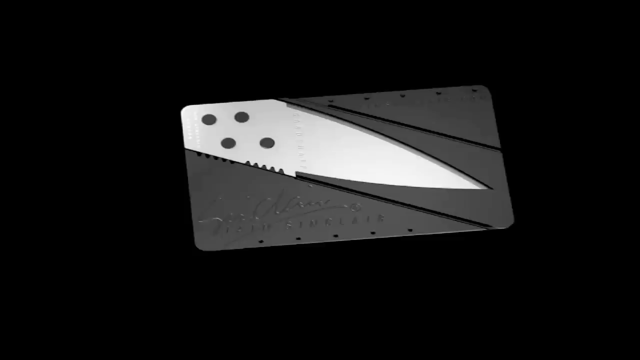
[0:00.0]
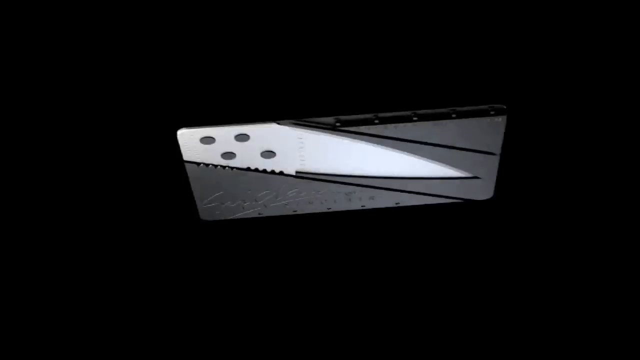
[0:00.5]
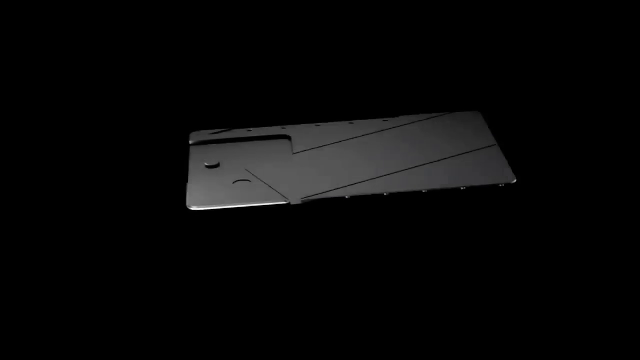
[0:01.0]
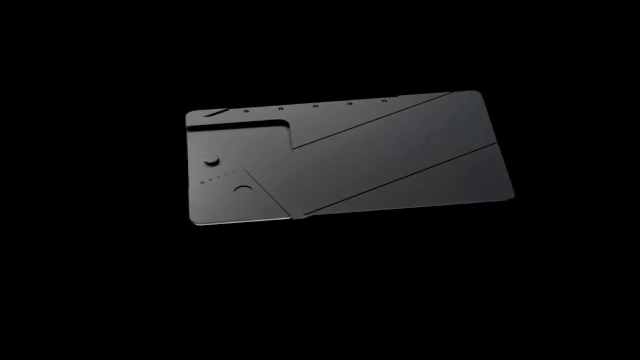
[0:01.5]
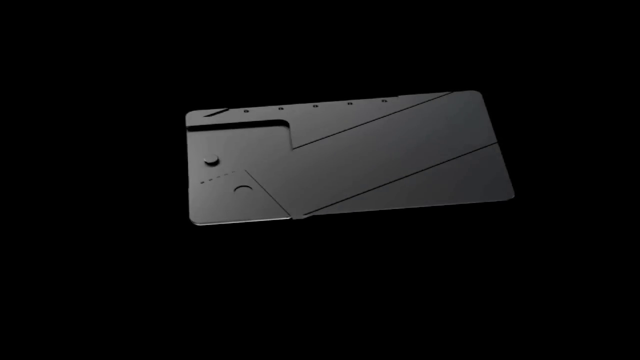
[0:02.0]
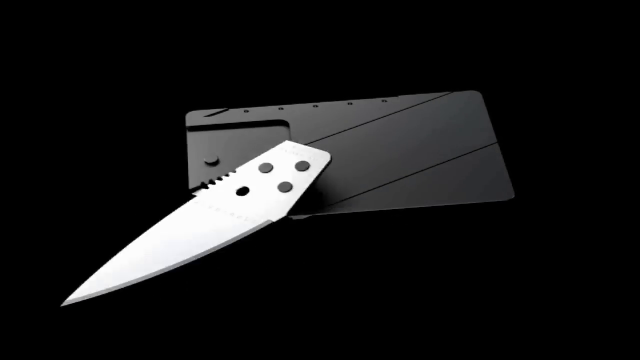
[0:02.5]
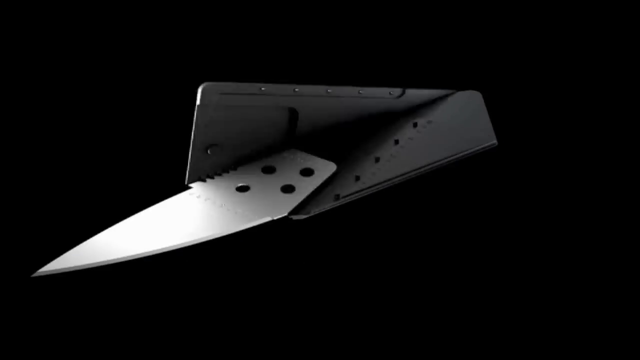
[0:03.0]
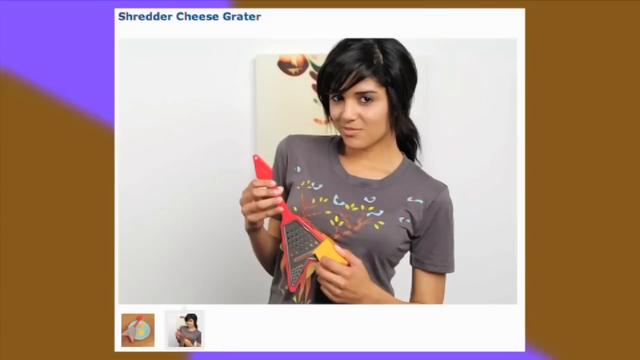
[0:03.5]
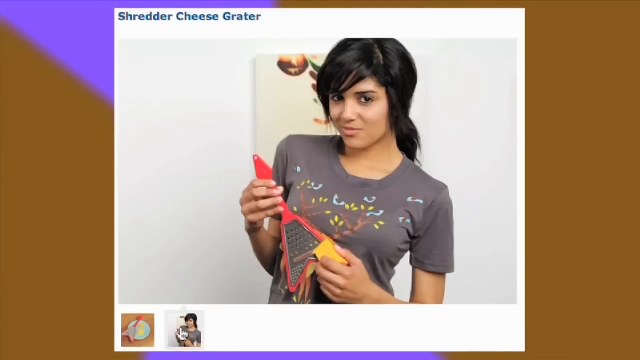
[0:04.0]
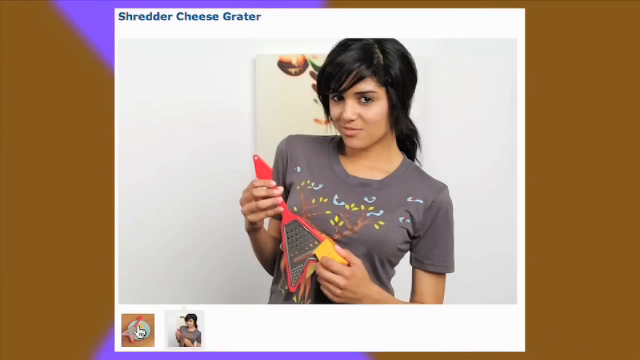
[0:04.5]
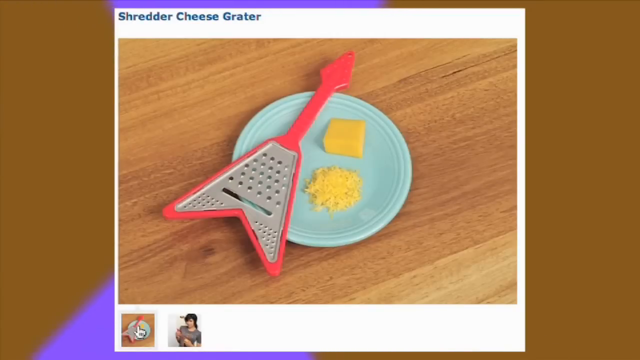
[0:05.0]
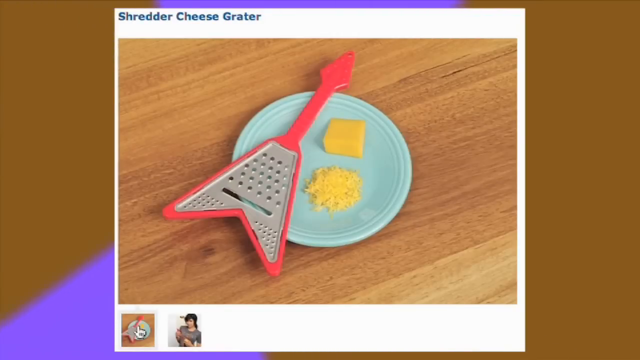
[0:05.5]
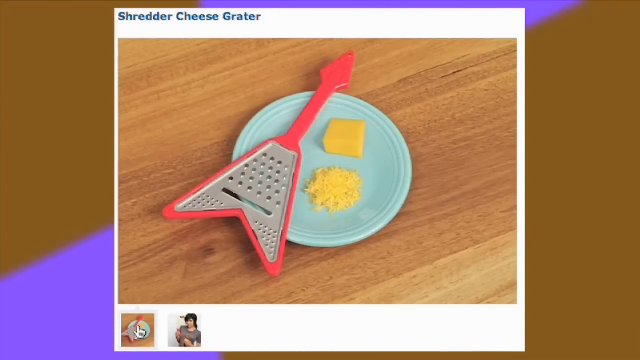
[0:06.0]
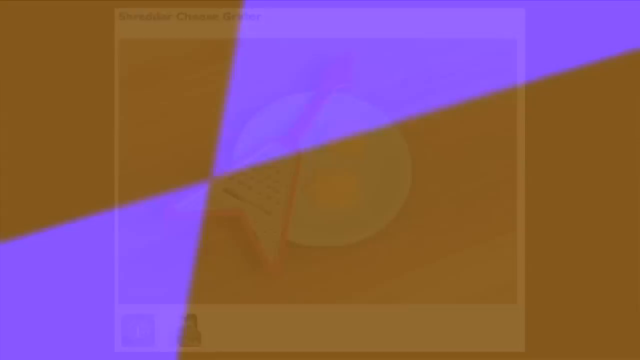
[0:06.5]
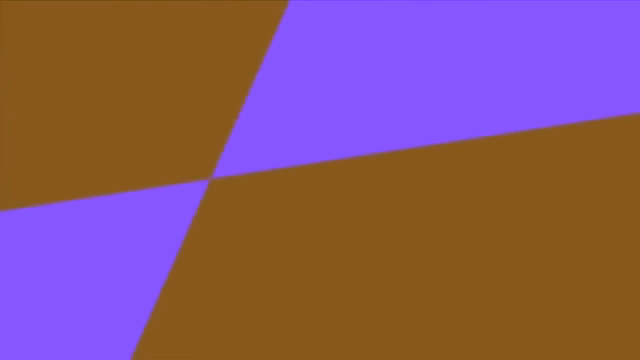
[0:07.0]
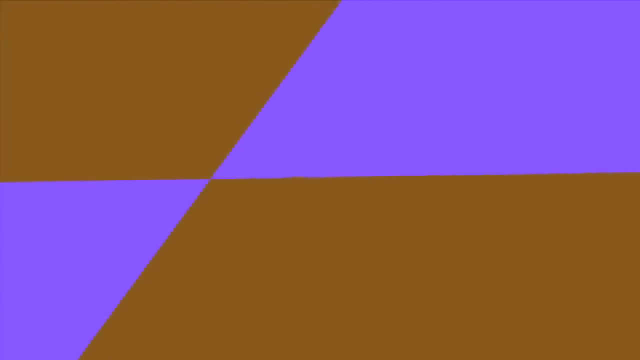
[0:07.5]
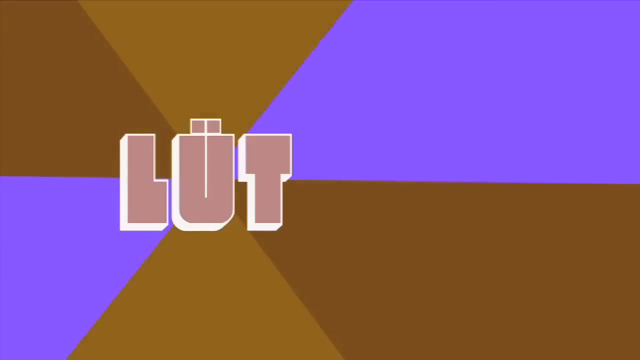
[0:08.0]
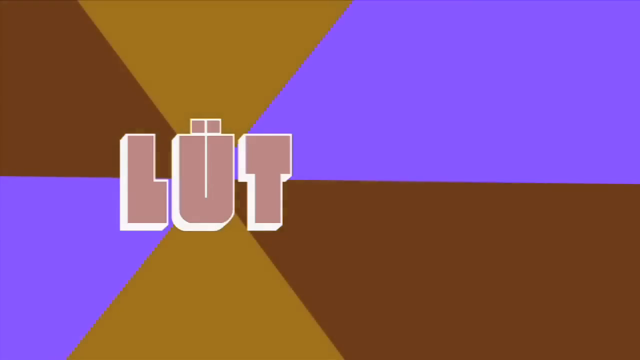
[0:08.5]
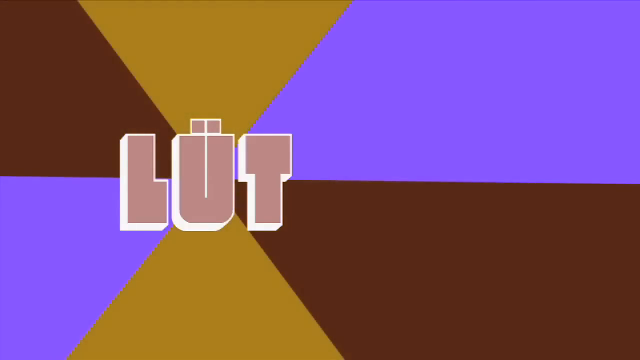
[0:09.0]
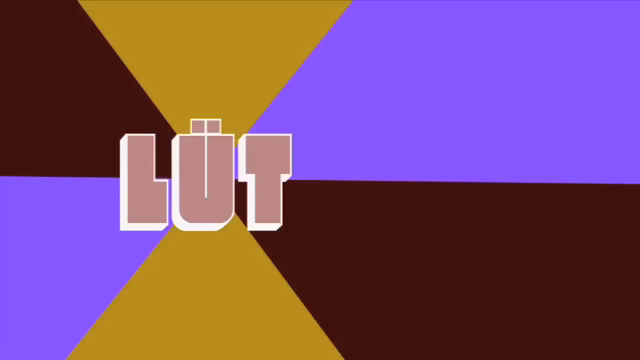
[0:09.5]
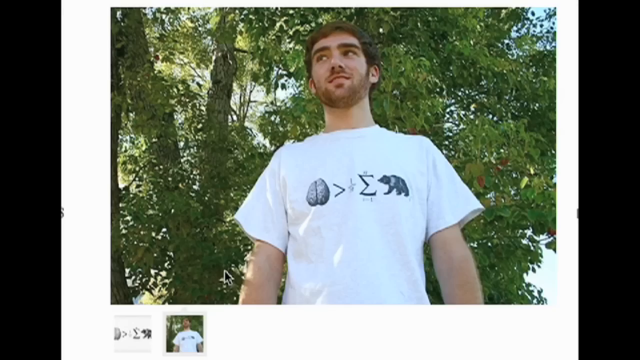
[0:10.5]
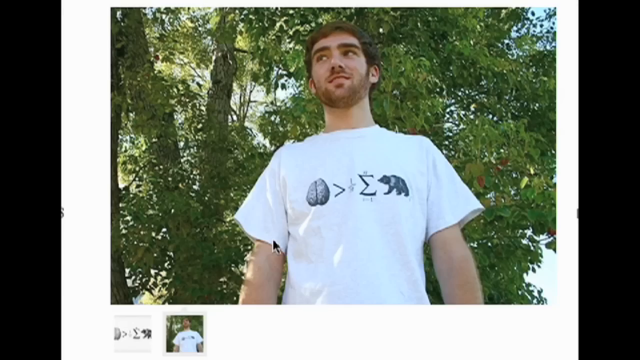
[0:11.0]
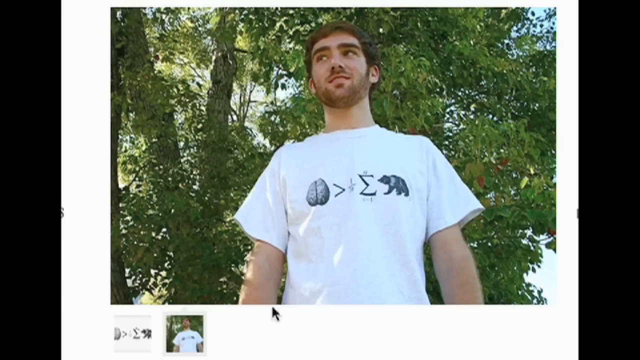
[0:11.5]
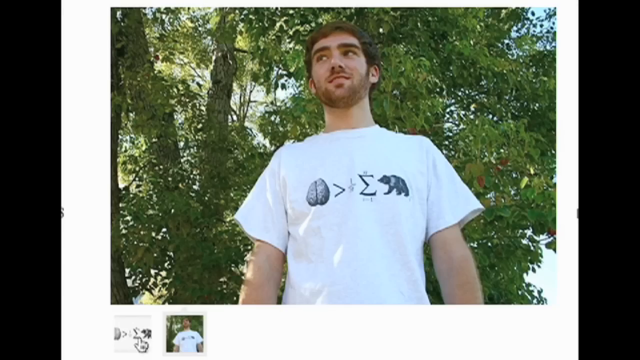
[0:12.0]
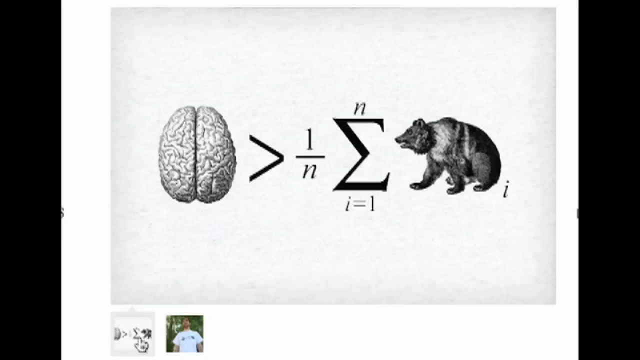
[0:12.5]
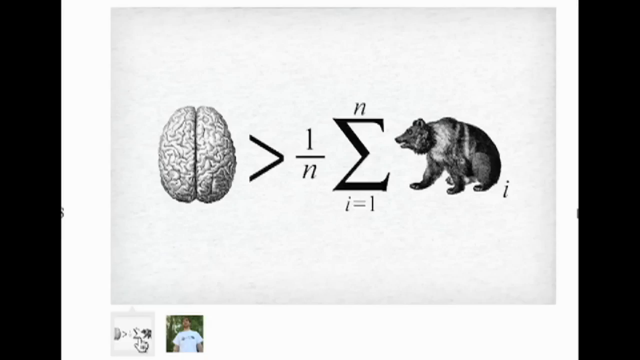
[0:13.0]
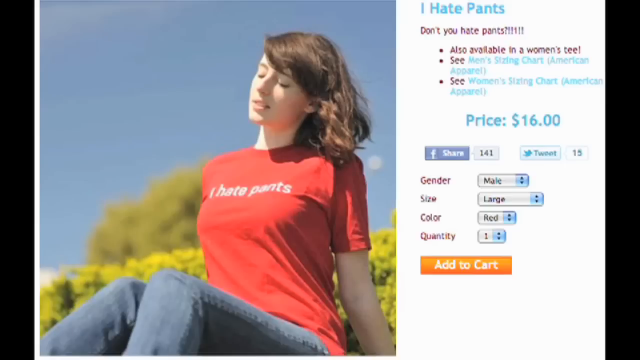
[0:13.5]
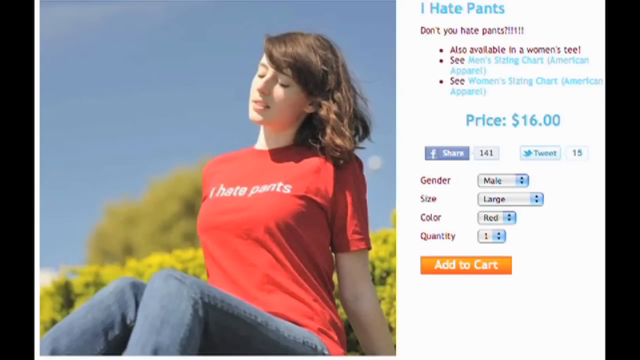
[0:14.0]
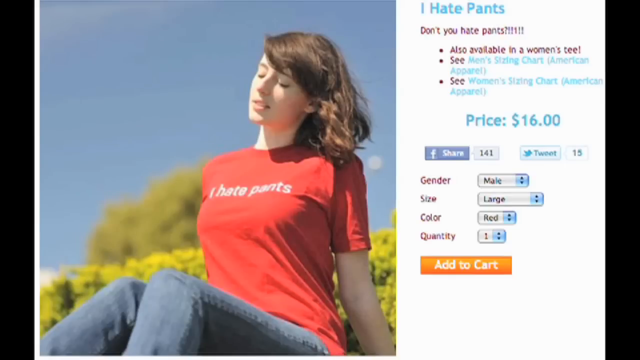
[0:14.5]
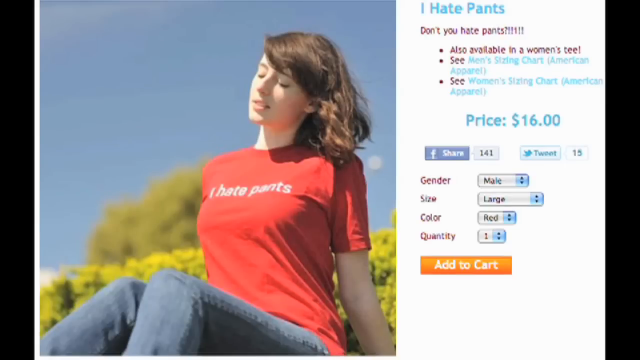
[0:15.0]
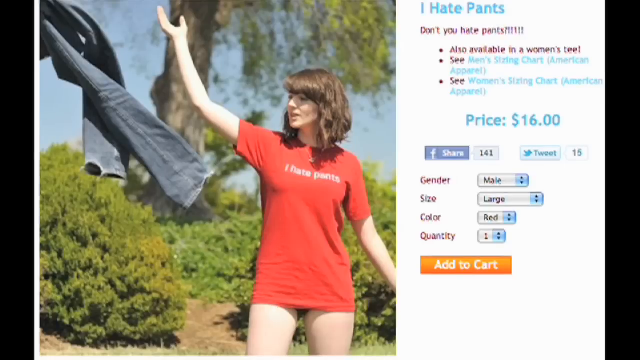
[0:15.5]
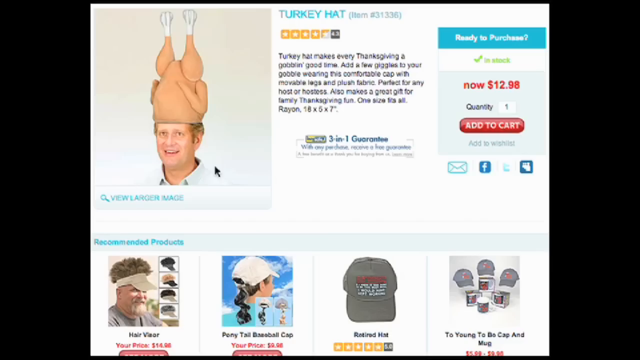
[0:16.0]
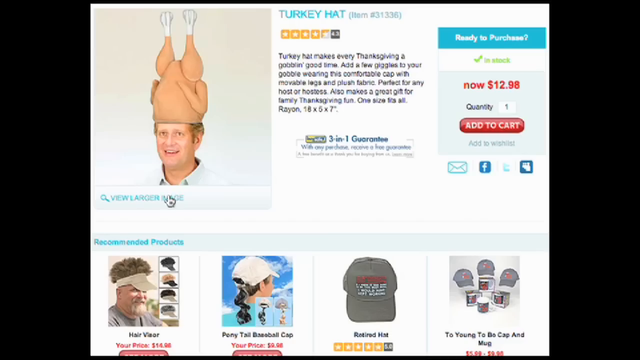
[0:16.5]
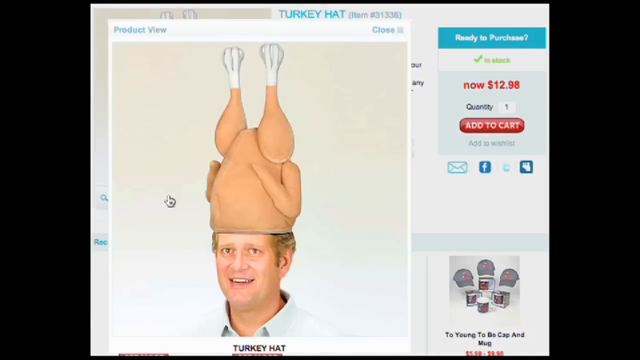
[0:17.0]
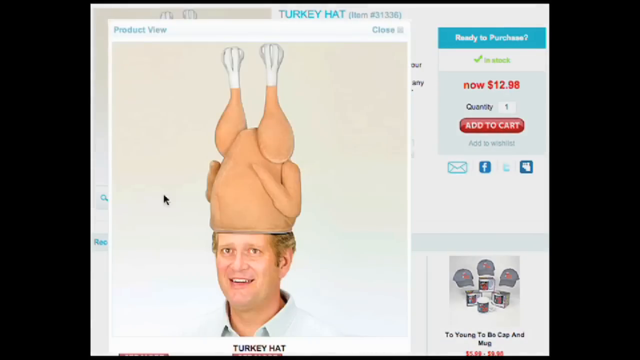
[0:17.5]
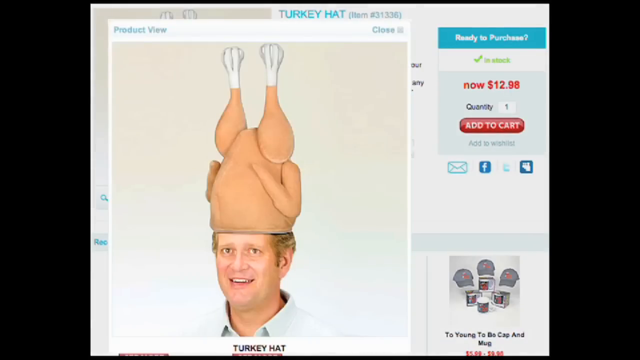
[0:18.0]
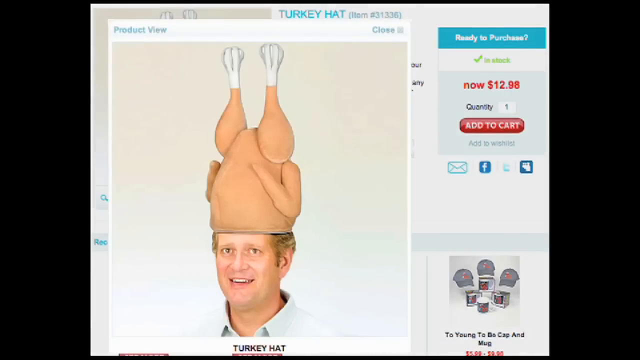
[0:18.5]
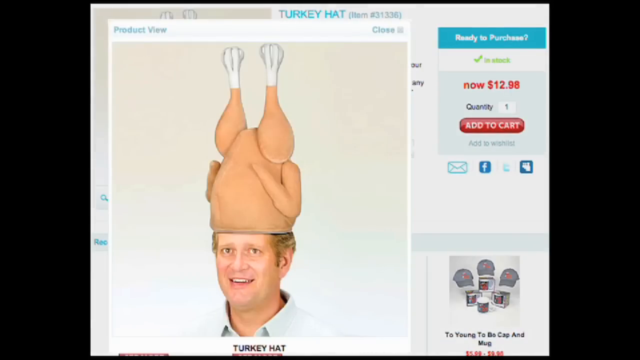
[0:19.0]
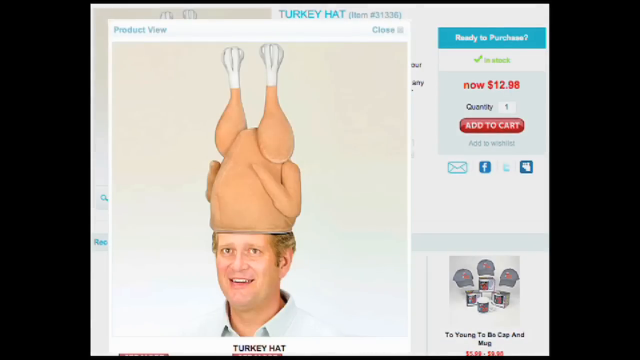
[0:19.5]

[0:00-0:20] A card with an image of a knife is shown; parts of the card start to fold until it forms an actual knife. The video cuts to a girl in a gray t-shirt holding what looks like a small guitar whose body is shaped like a cheese grater. The guitar is on top of a turquoise plate, and to the right of it inside the plate are a block of cheese and some shredded cheese, all on a wooden counter. Text comes out in the forefront in what kind of looks like a violet color, in block letters with a white border, showing the letters L-U-T. Next comes a person wearing a white t-shirt with graphics on the front that kind of look like a bear and a brain, then a picture of what was on his t-shirt, and then a woman wearing a red t-shirt.